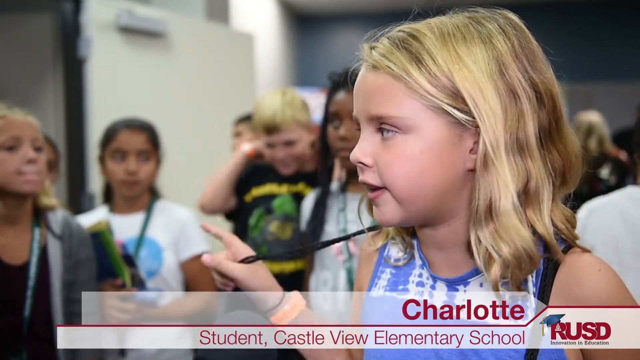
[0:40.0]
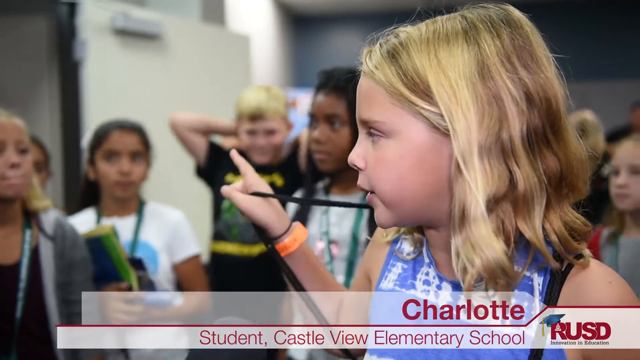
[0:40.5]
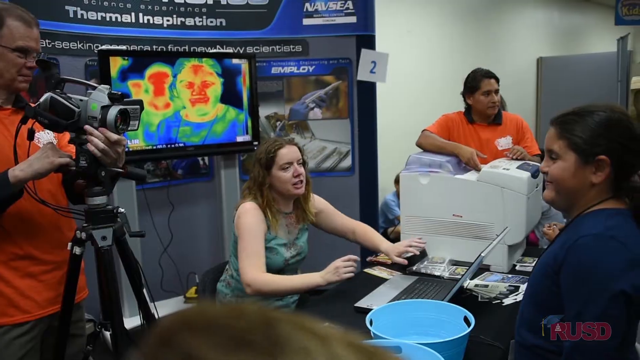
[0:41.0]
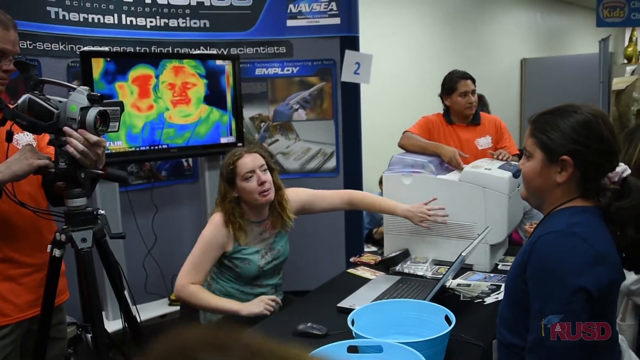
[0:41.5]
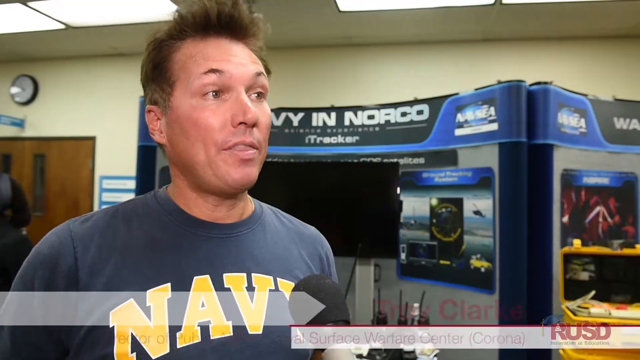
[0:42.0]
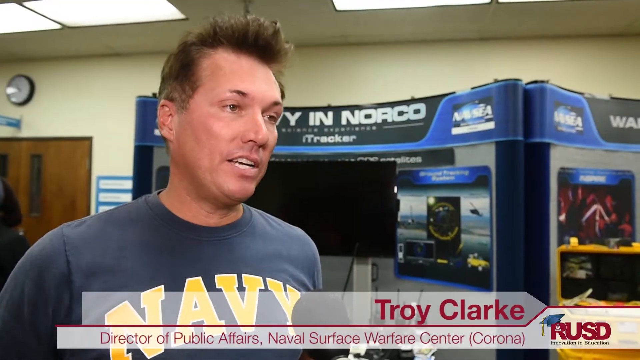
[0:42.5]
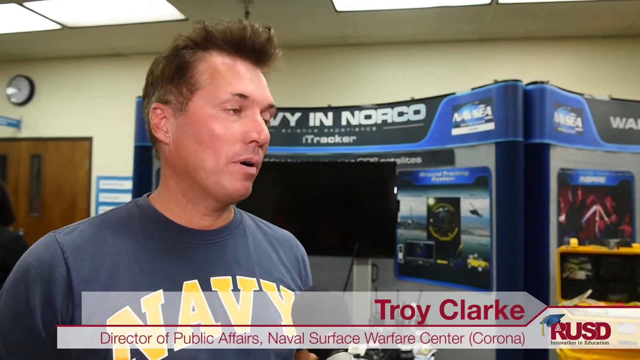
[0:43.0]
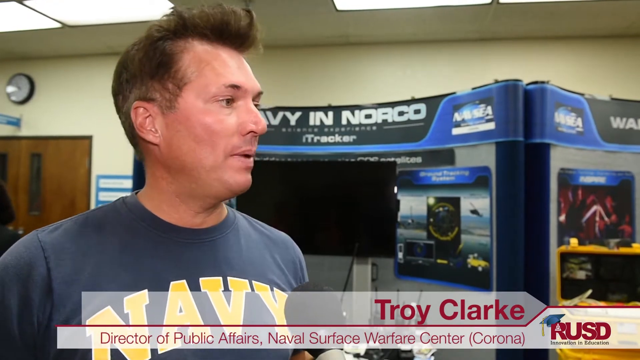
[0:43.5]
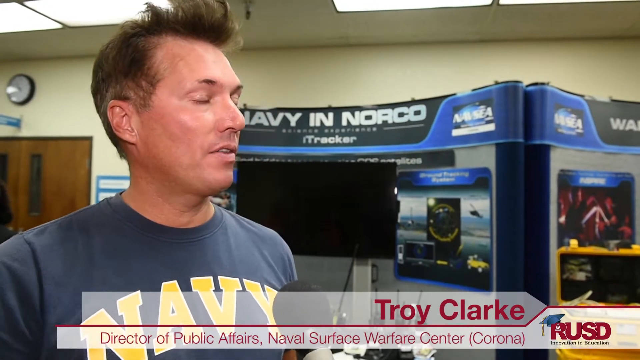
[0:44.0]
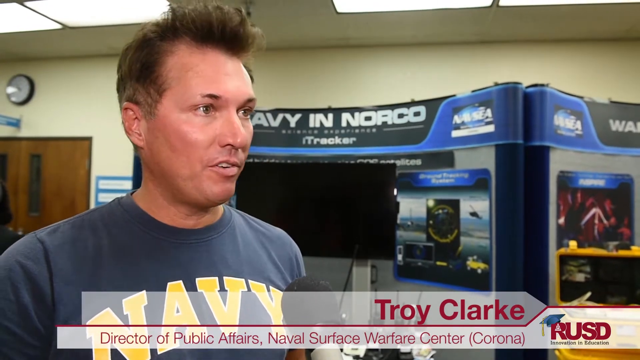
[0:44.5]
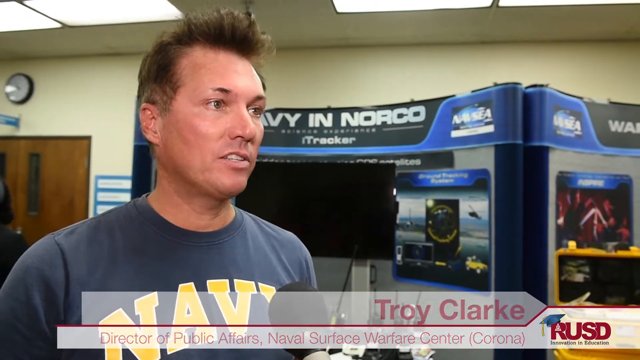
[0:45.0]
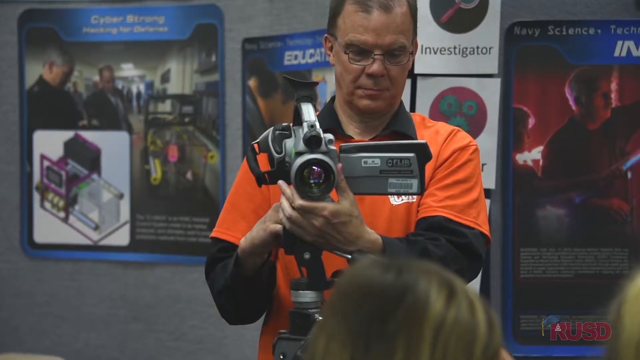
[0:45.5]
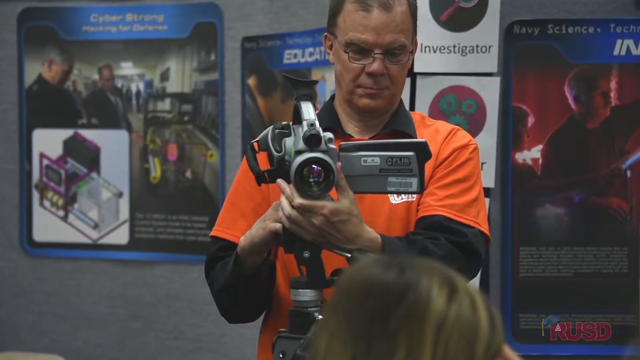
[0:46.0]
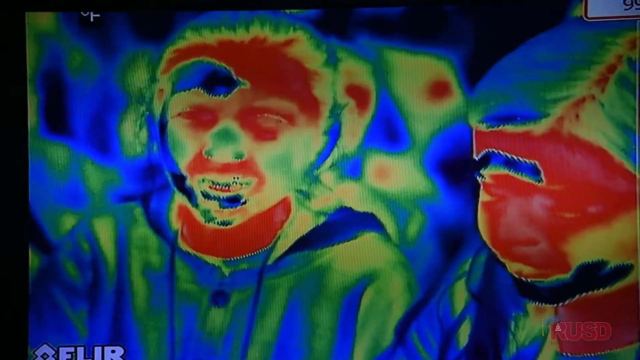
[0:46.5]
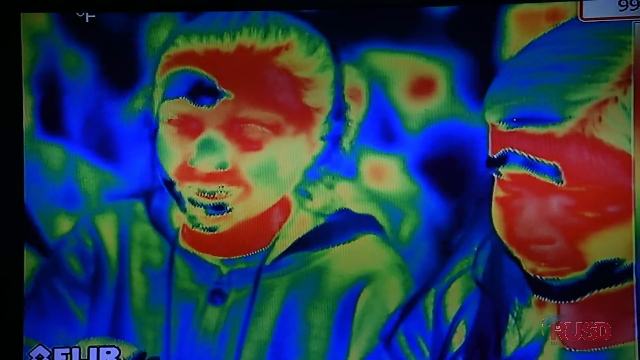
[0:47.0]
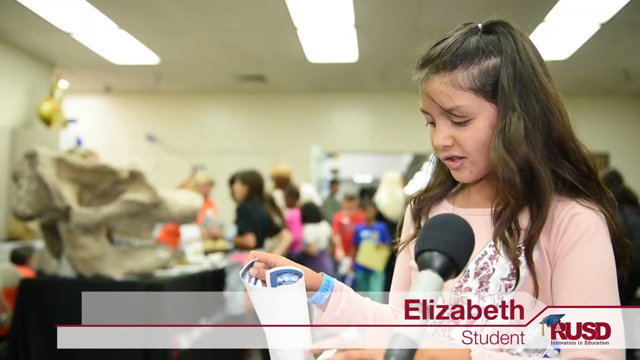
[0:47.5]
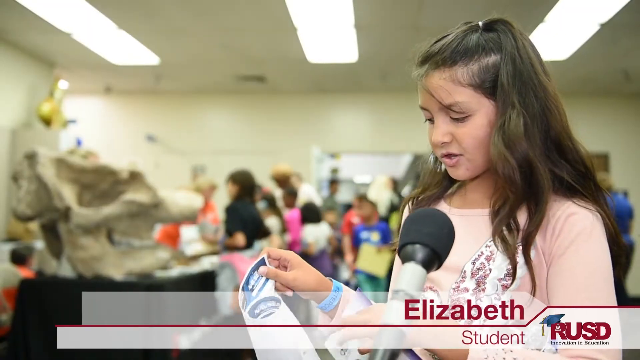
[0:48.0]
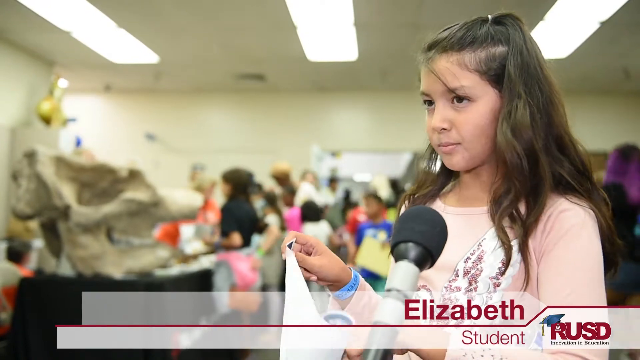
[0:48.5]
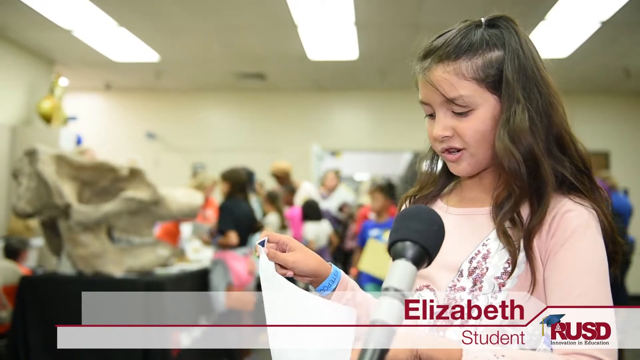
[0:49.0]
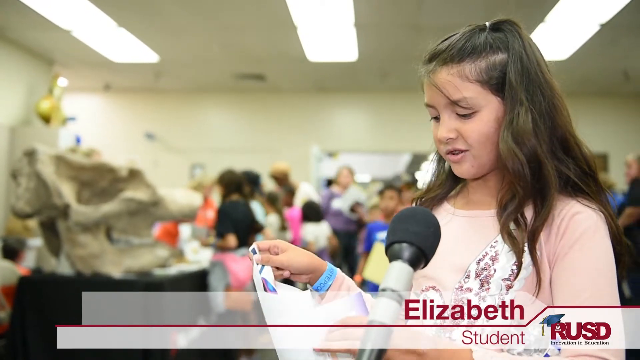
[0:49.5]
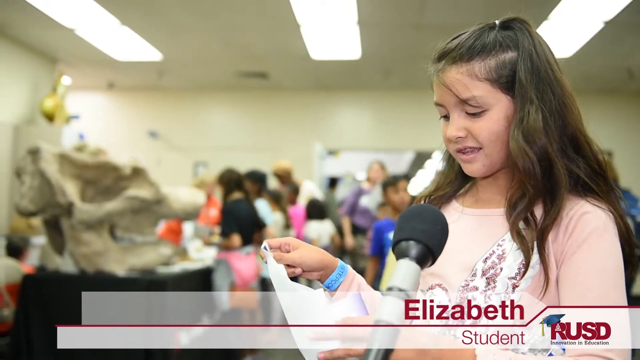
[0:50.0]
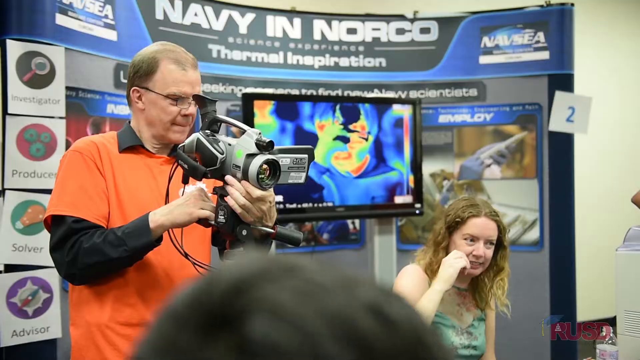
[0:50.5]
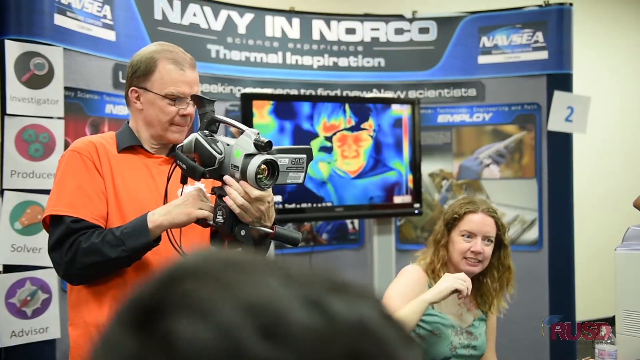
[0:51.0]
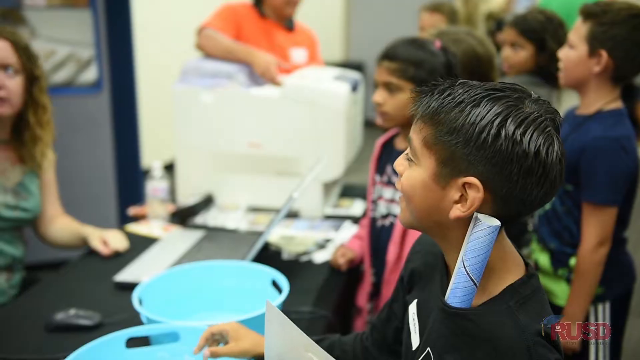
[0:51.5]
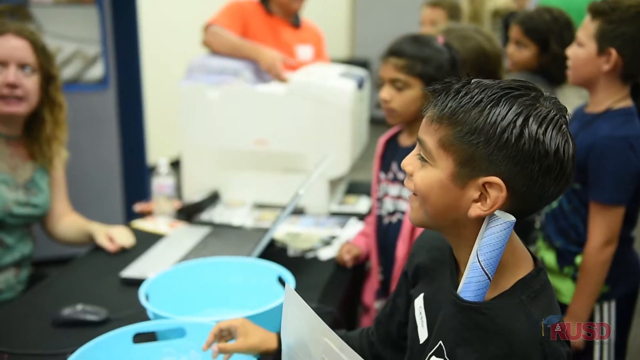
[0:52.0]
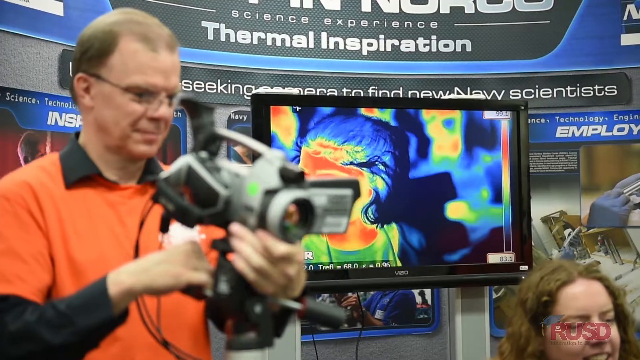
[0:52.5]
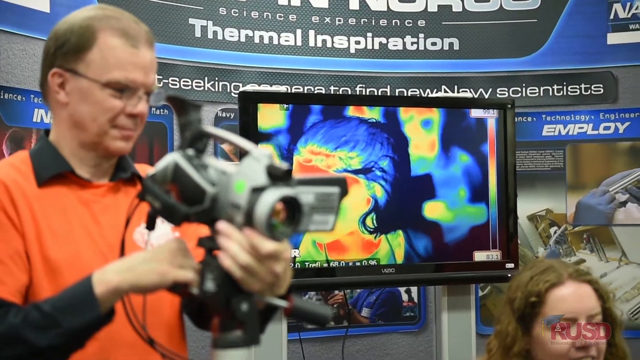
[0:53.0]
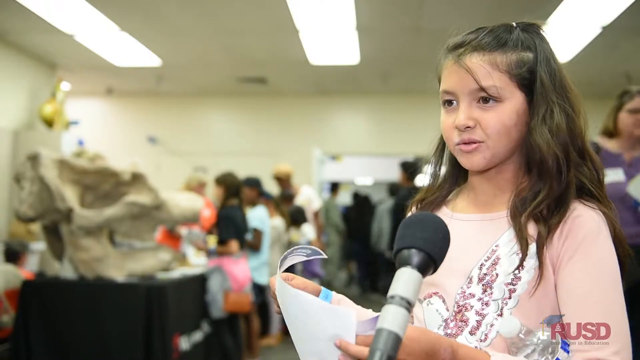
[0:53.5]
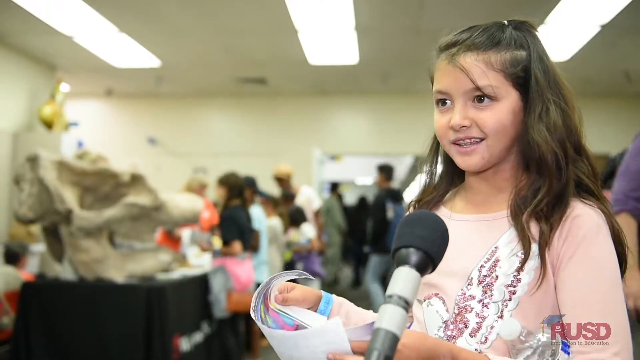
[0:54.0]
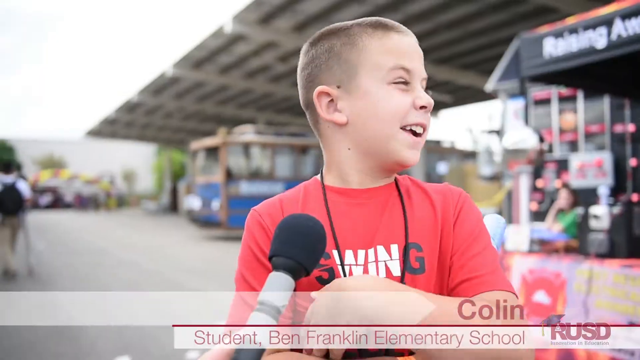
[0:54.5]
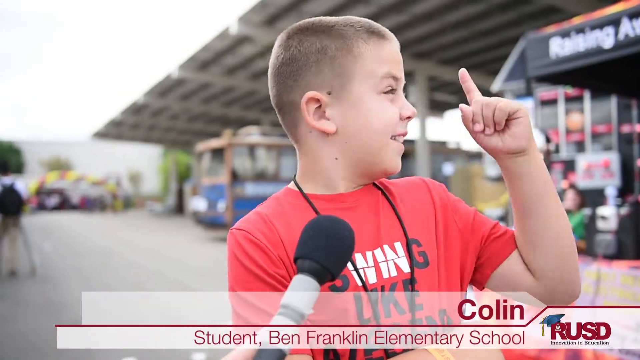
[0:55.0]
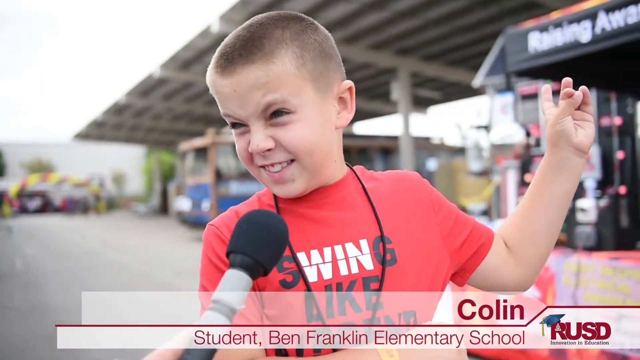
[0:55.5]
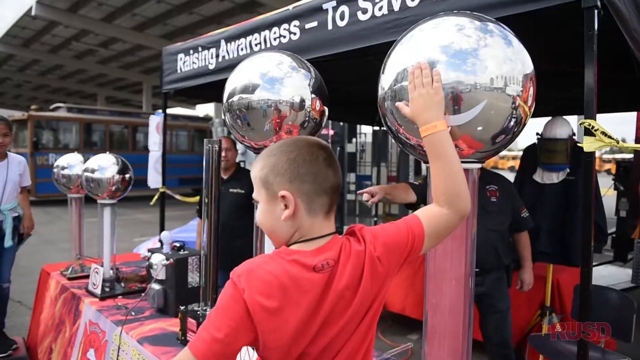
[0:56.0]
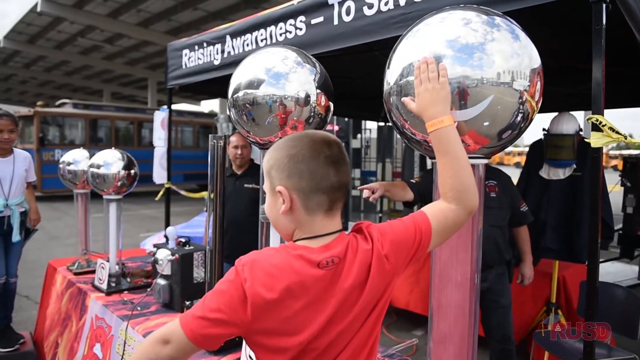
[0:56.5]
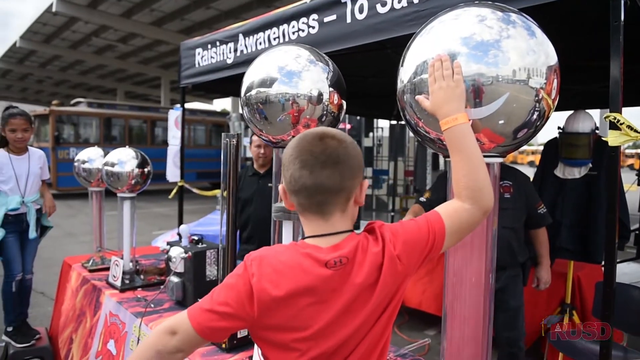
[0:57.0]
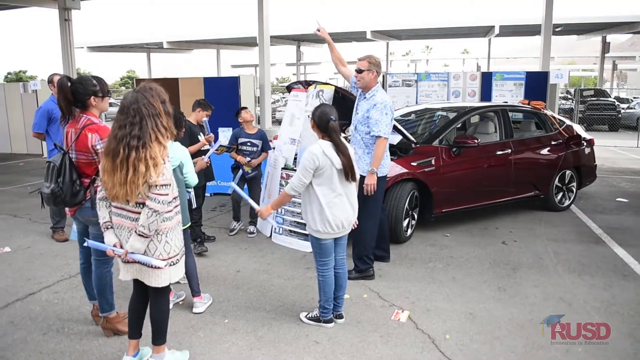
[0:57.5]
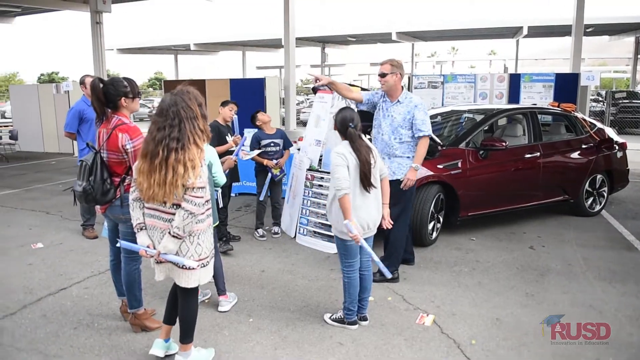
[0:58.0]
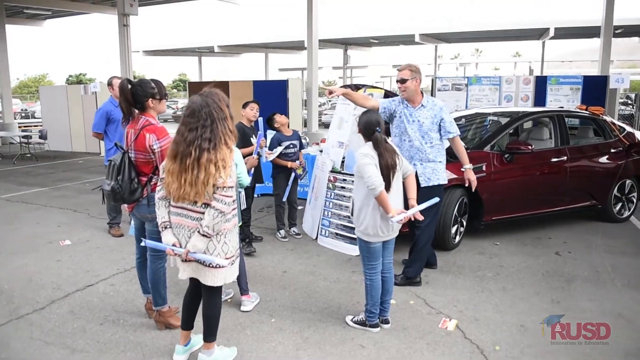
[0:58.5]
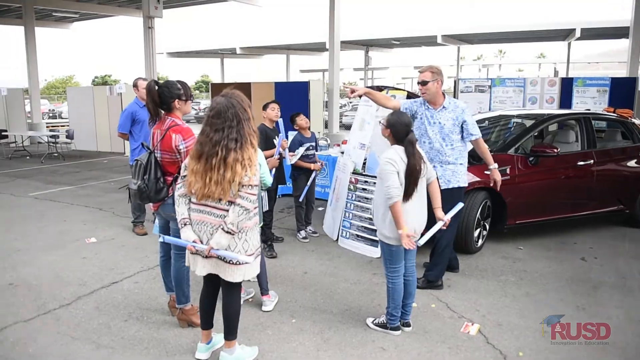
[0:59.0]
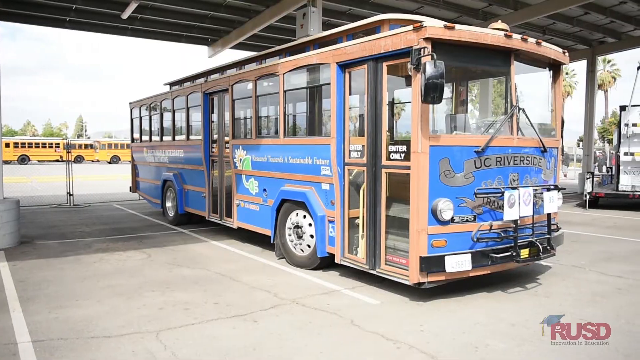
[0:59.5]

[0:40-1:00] A child named Charlotte gives her opinion of the STEP program at Borns; she looks very interested in what is going on. Thermal imaging shows some of the students taking the tour. A man named Troy Clark speaks, apparently on behalf of the military. A girl named Elizabeth is in front of a microphone, looking at what is possibly a dossier. A demonstration shows seeing through a camera: a banner above a booth says "Navy," and a man there films with a thermal imaging camera. Many of the students arrive on a wooden bus that says "Riverside" on the front.